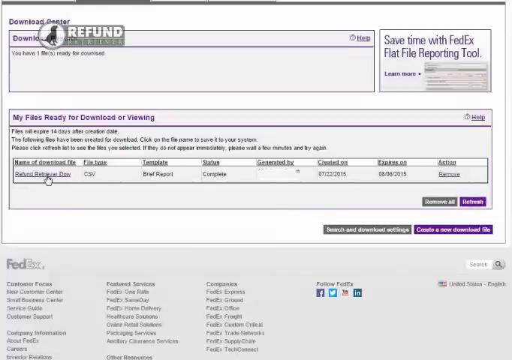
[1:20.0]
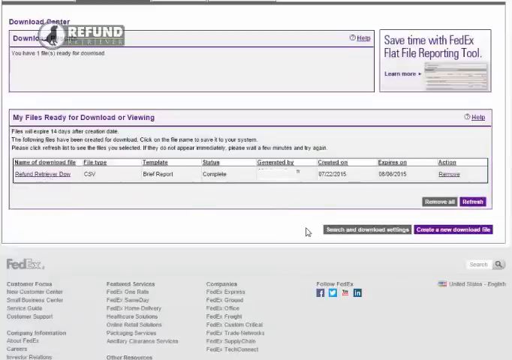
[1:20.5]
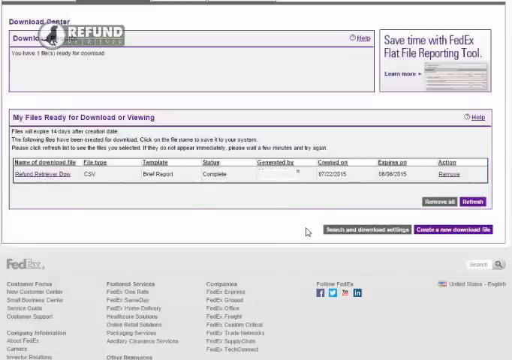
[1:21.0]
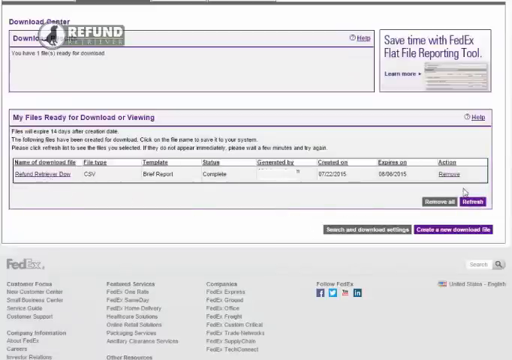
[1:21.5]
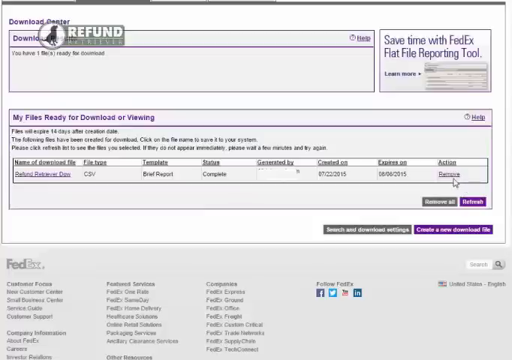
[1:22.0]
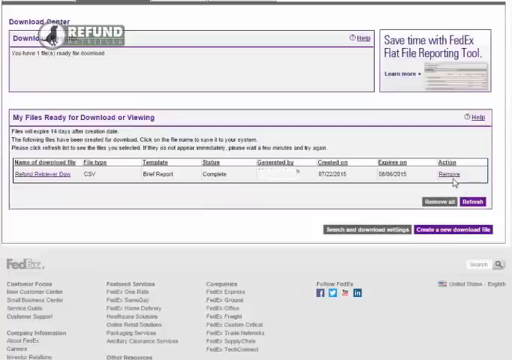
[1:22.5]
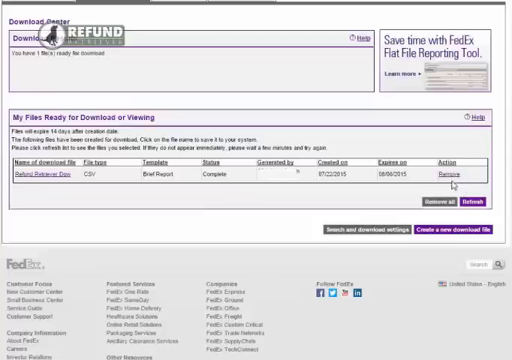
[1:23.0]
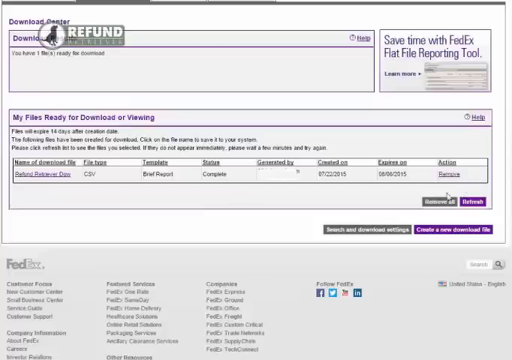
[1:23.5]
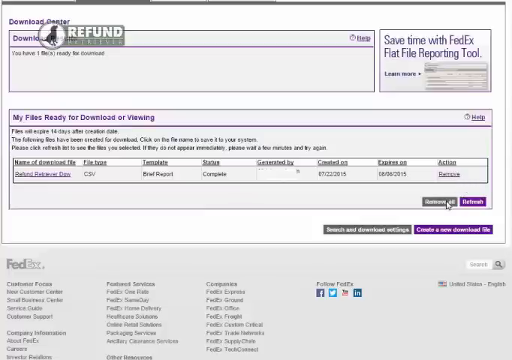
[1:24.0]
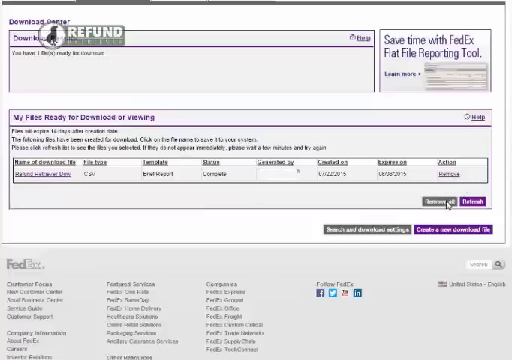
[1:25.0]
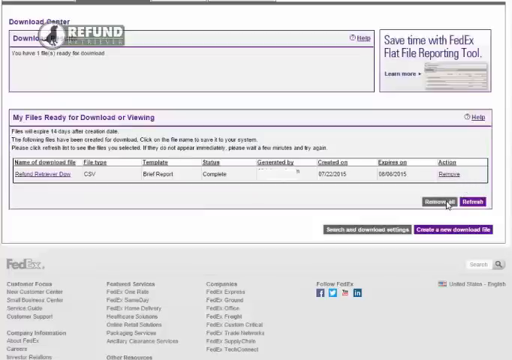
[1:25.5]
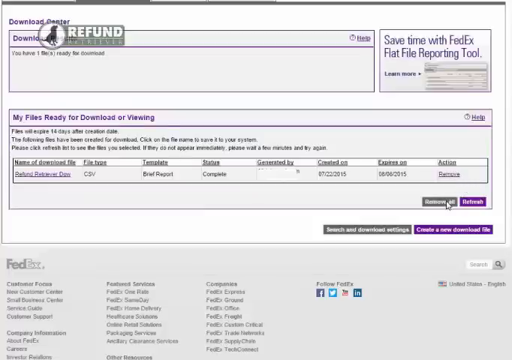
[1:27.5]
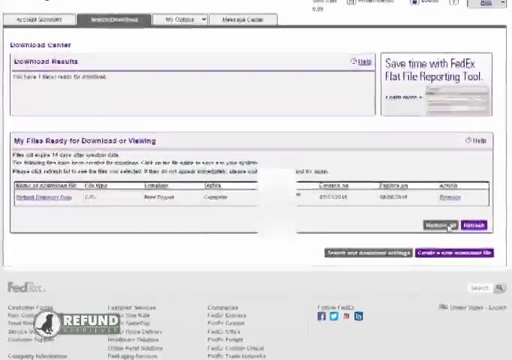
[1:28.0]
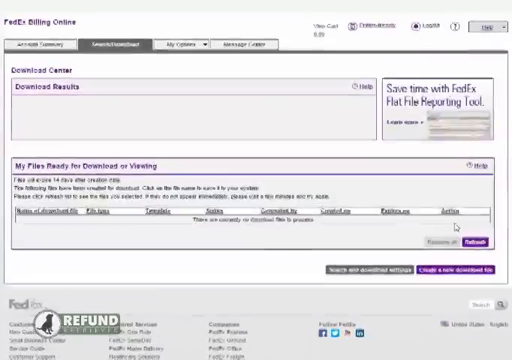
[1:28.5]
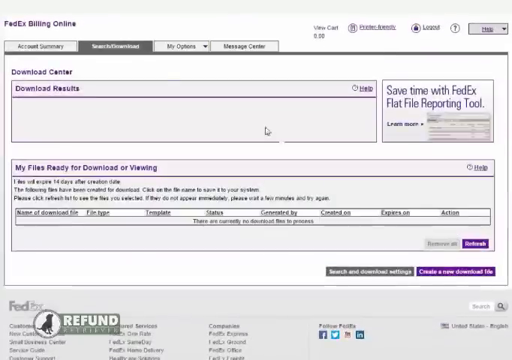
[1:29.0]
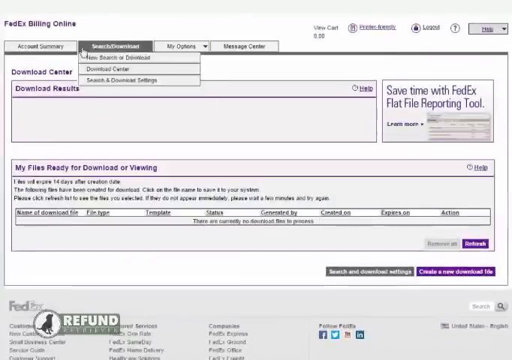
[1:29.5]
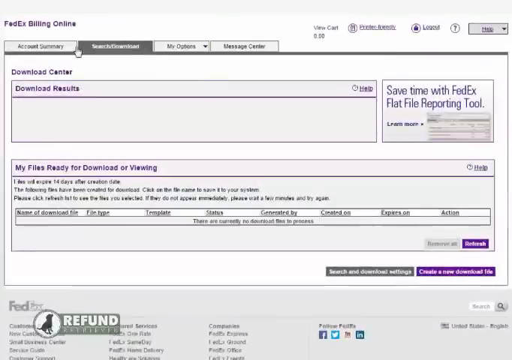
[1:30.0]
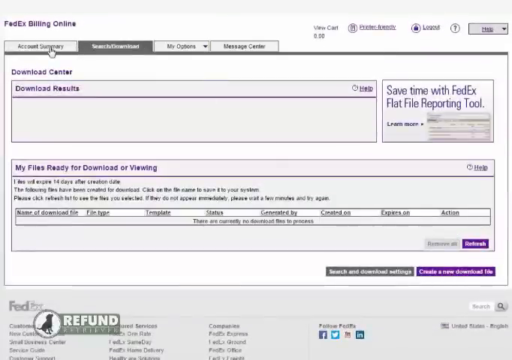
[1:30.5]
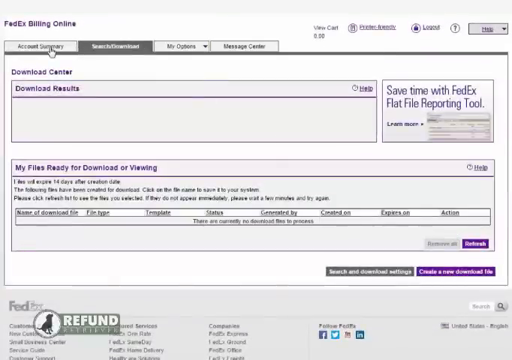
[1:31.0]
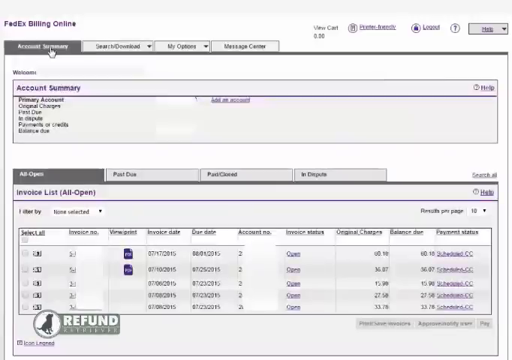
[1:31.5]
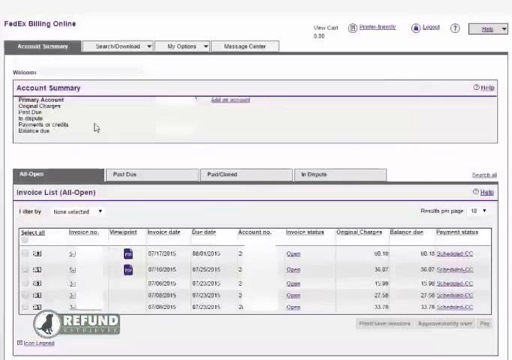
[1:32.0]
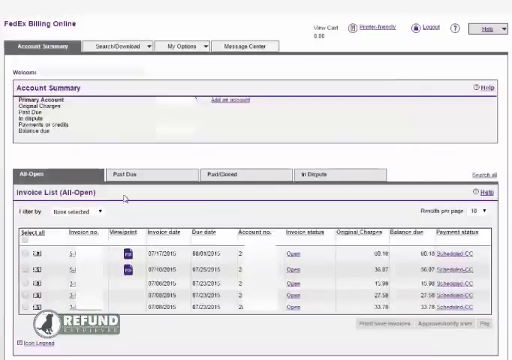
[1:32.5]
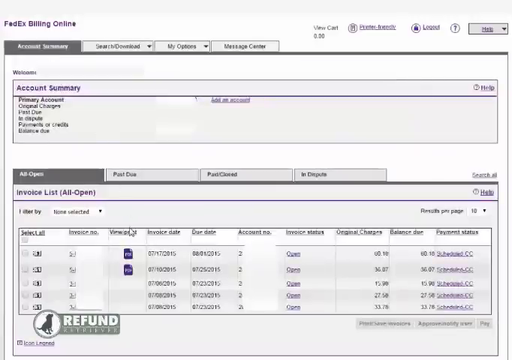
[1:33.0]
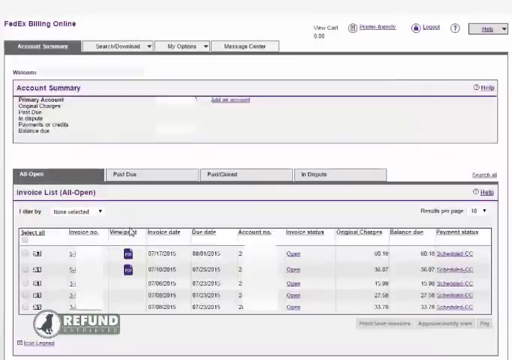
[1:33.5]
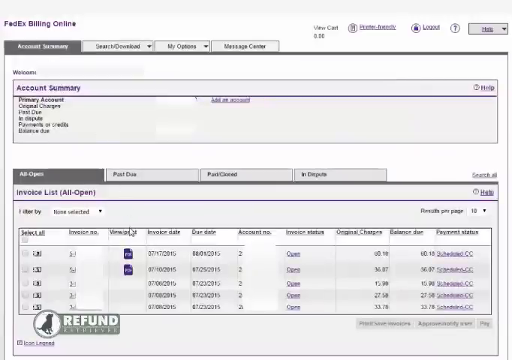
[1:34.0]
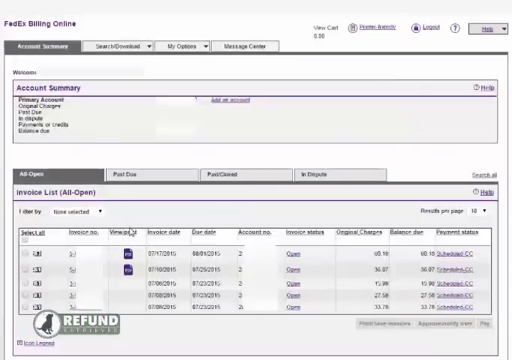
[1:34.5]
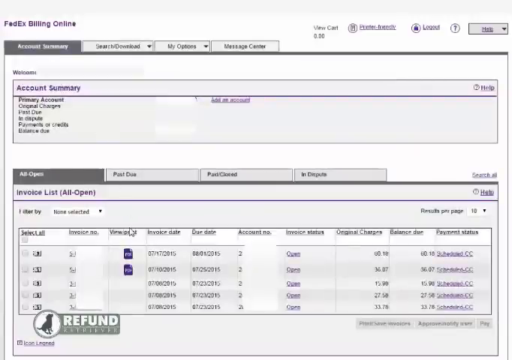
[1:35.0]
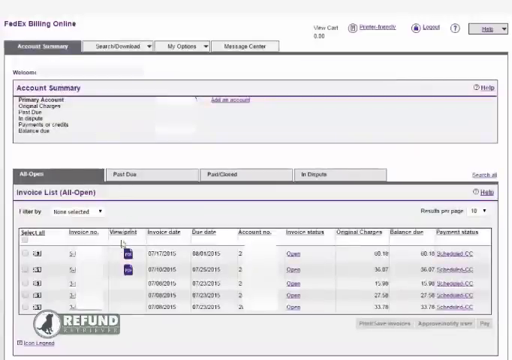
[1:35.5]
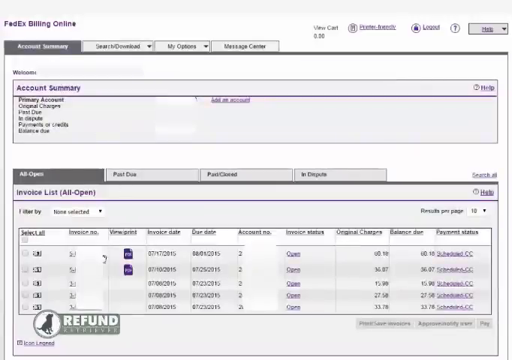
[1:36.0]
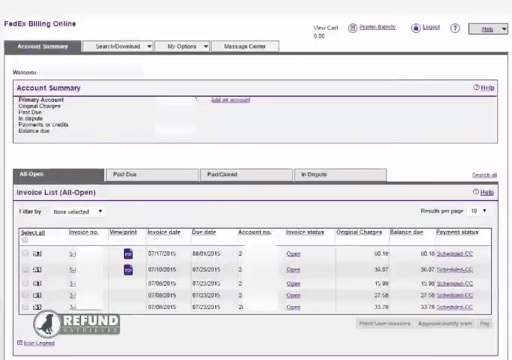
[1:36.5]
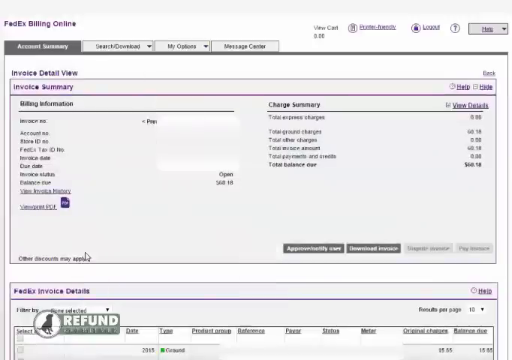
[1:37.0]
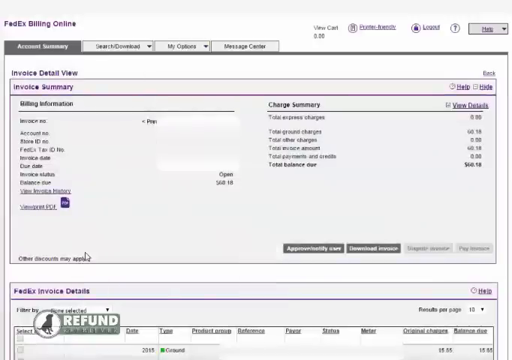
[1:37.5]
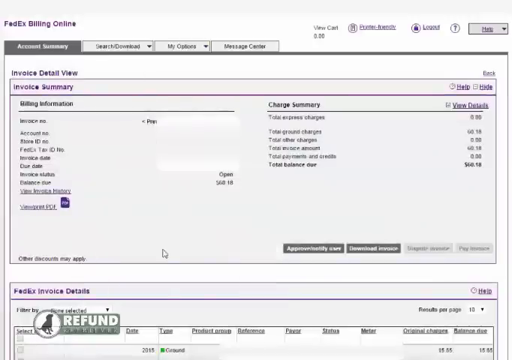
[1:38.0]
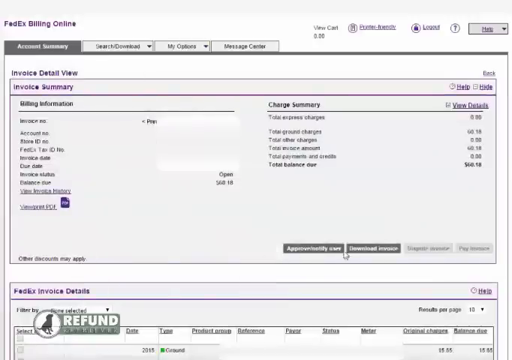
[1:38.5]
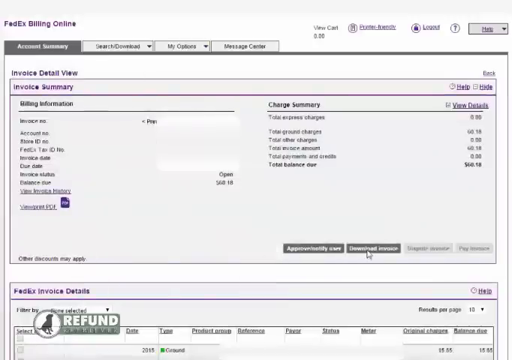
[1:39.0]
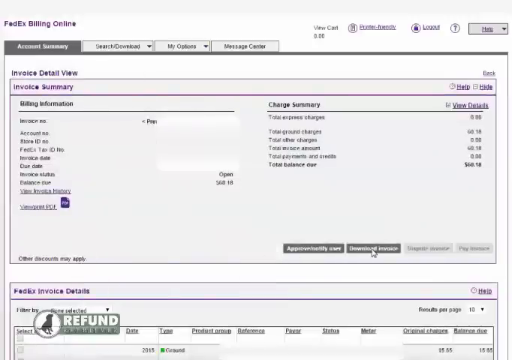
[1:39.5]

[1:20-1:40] A screen shows a purple header in the top left that says "download center." The user seems to scroll up, revealing "FedEx billing online" at the top left, with four tabs underneath it. The cursor is over the second tab, which is highlighted in gray, and a drop-down menu with three options appears underneath. The cursor then moves down and points at some blue text that has a list with dates on it. A gray button that says "Download" is clicked, and there is another gray button that looks like it says "Remove." The user scrolls back up and clicks on "Account Summary," which turns dark gray, and the page navigates to another page.